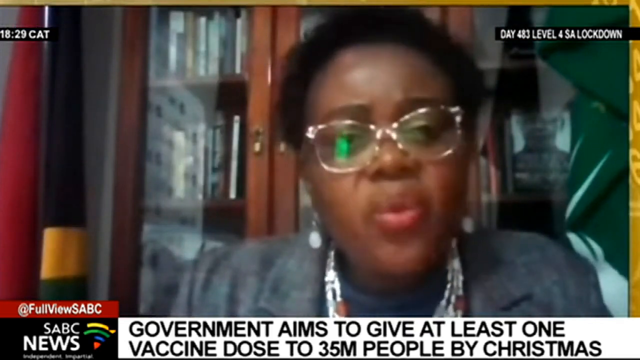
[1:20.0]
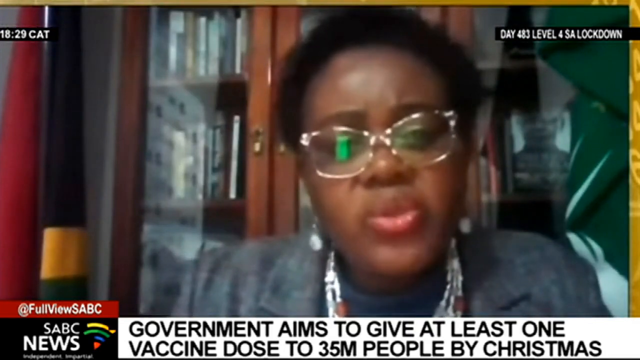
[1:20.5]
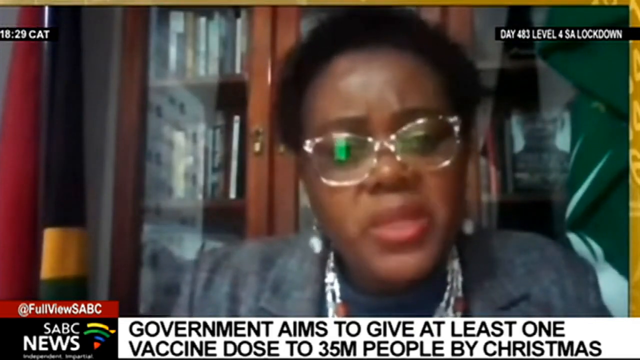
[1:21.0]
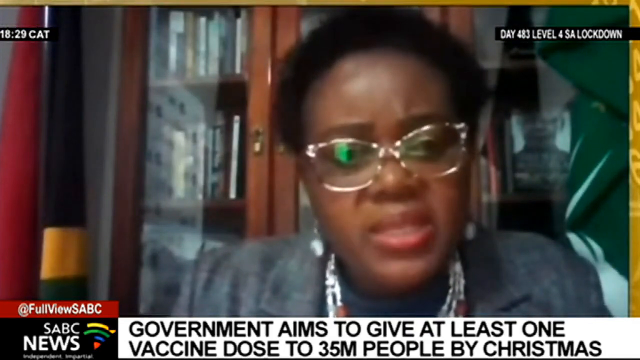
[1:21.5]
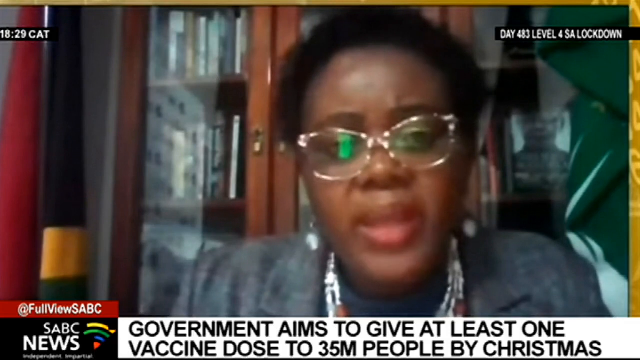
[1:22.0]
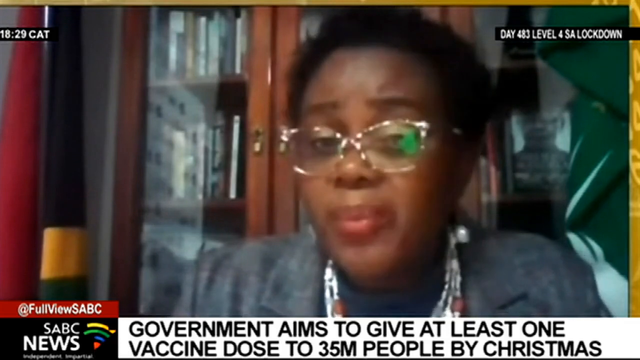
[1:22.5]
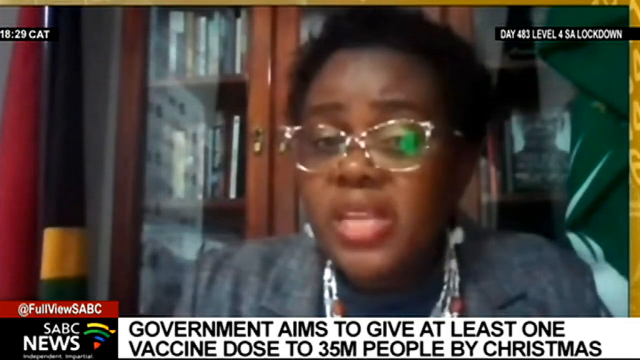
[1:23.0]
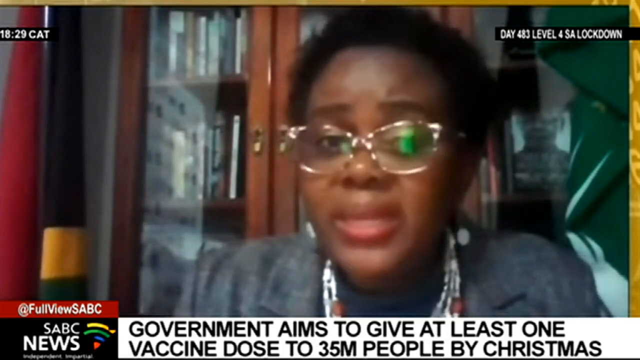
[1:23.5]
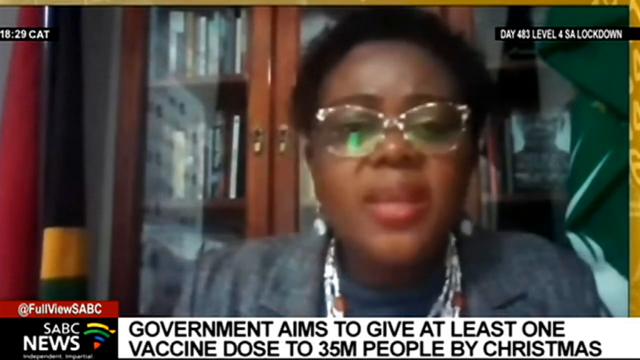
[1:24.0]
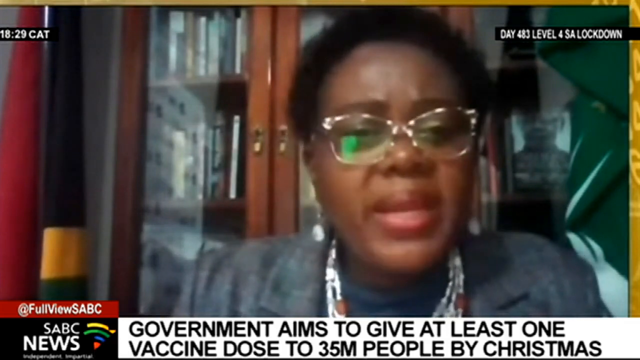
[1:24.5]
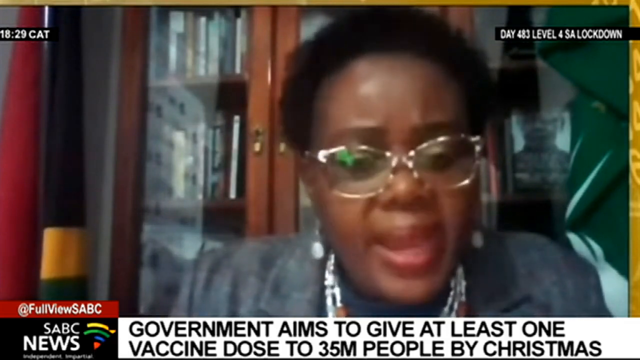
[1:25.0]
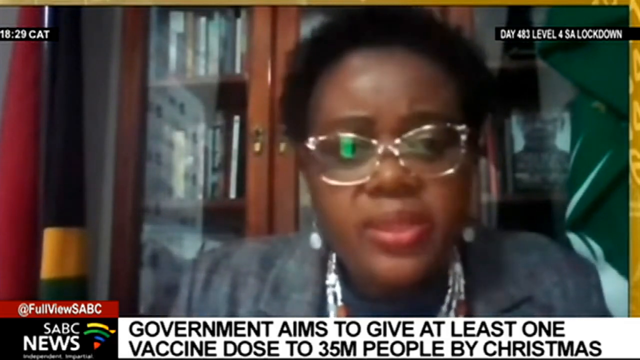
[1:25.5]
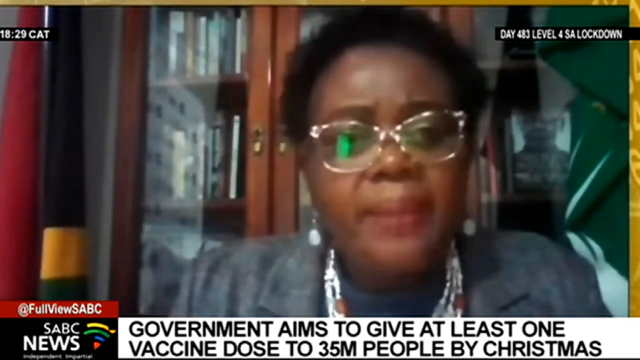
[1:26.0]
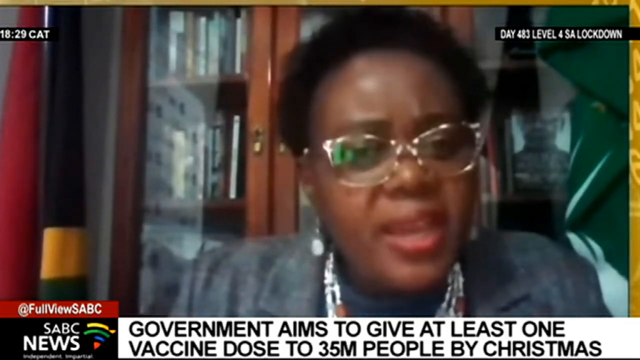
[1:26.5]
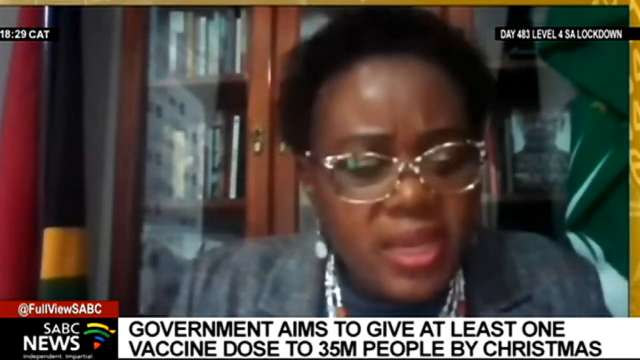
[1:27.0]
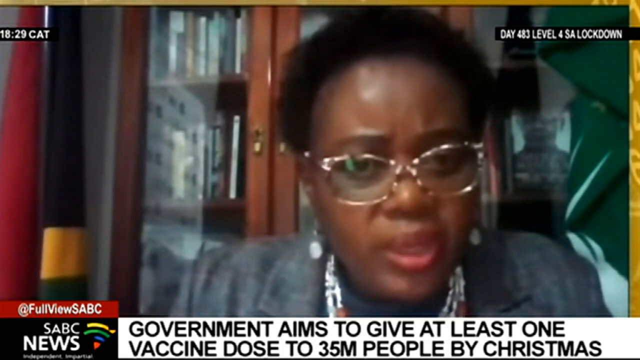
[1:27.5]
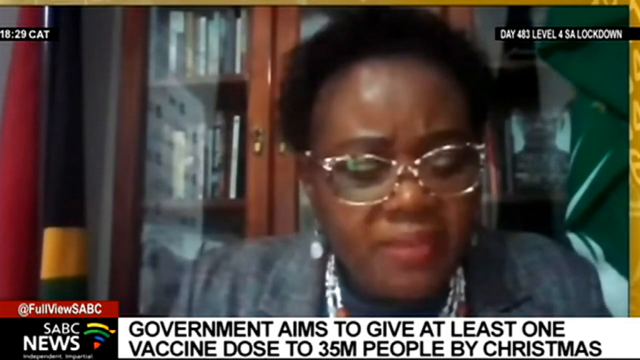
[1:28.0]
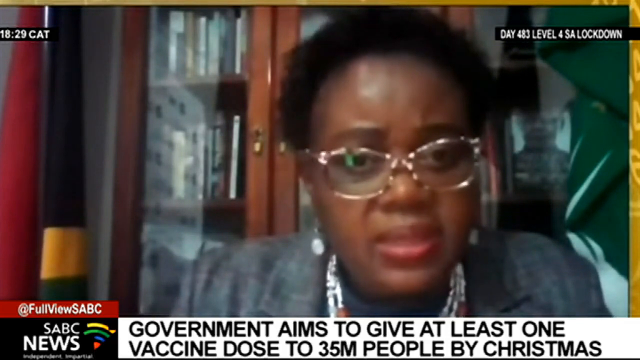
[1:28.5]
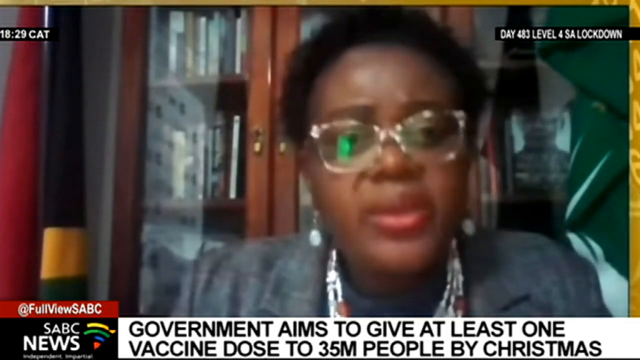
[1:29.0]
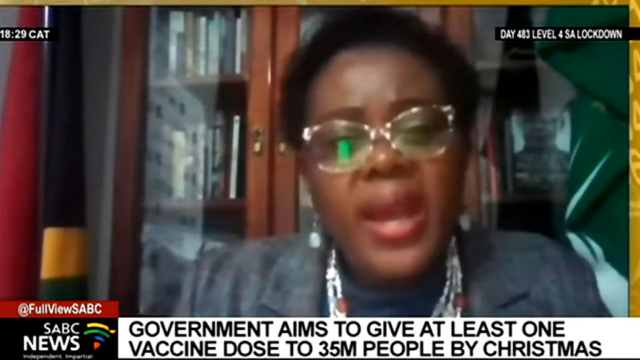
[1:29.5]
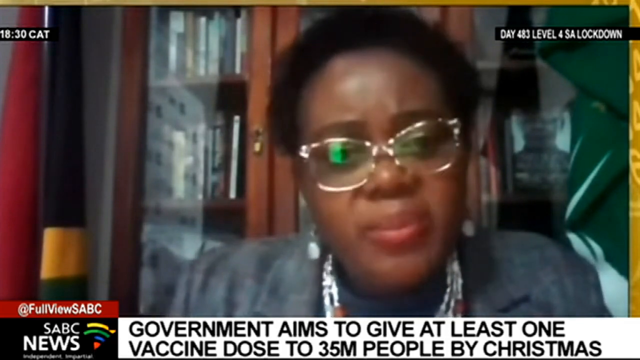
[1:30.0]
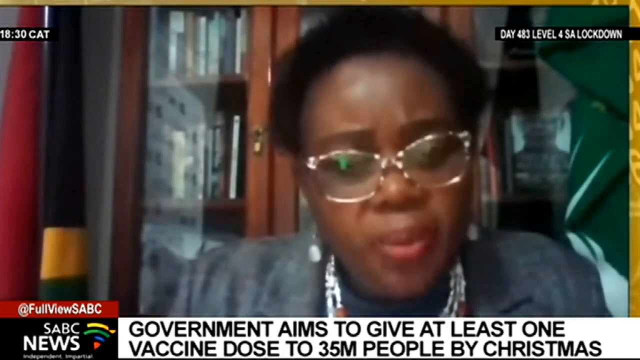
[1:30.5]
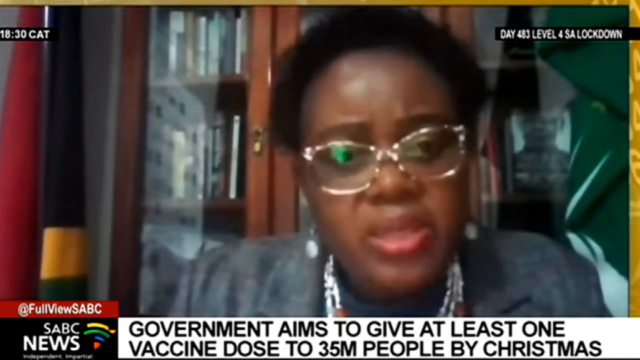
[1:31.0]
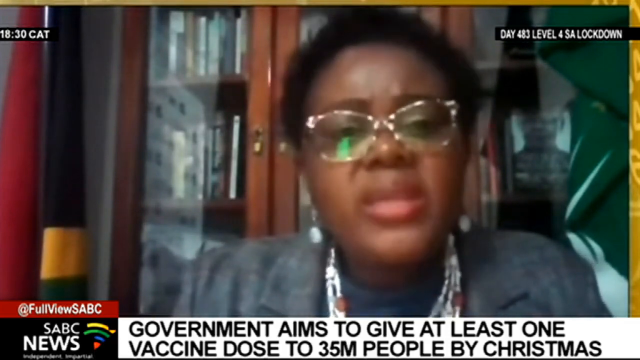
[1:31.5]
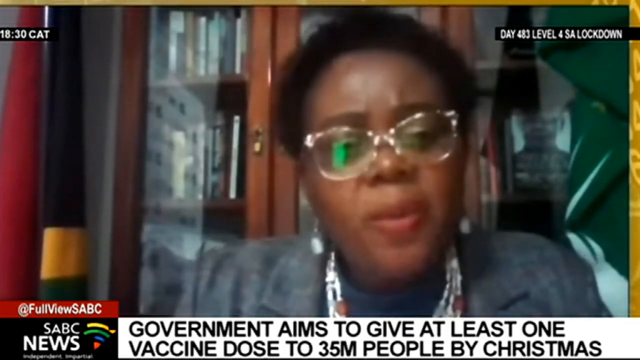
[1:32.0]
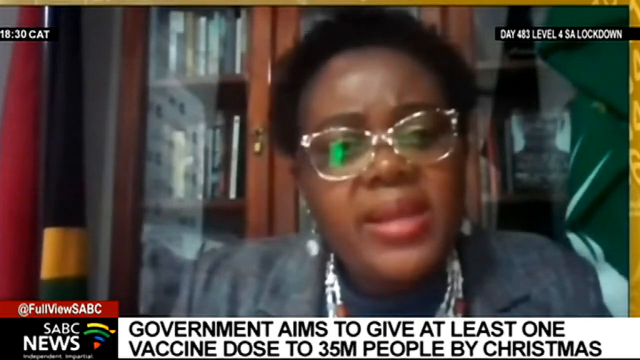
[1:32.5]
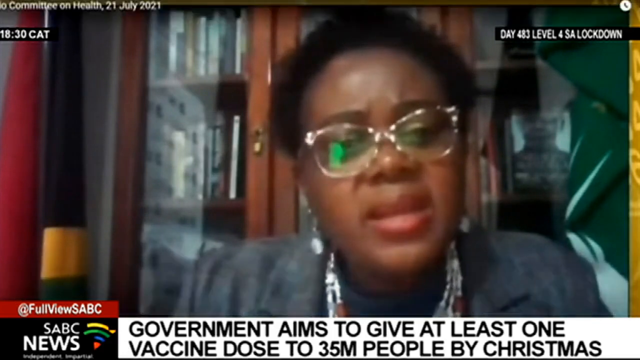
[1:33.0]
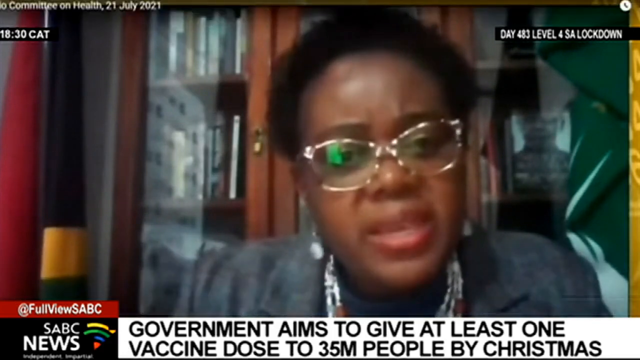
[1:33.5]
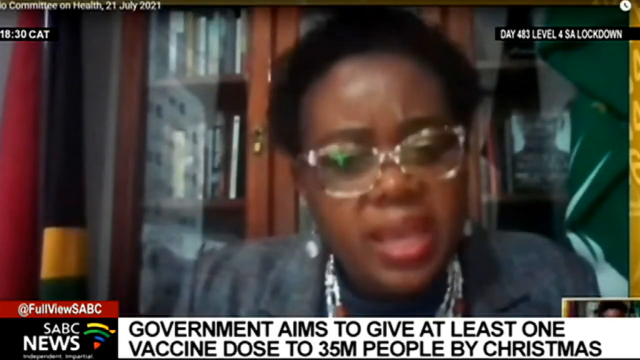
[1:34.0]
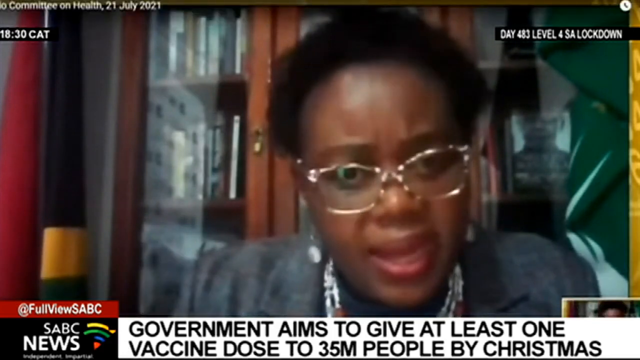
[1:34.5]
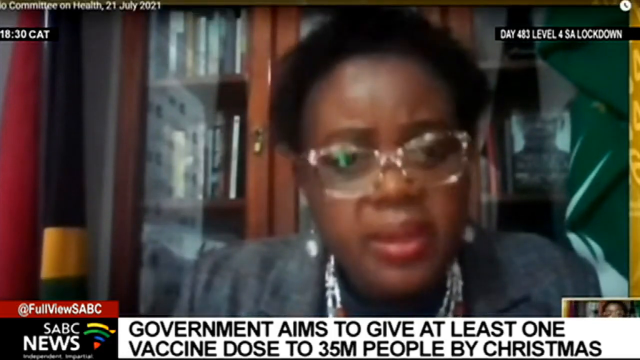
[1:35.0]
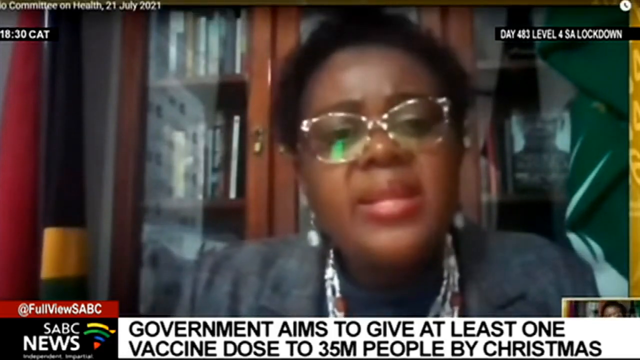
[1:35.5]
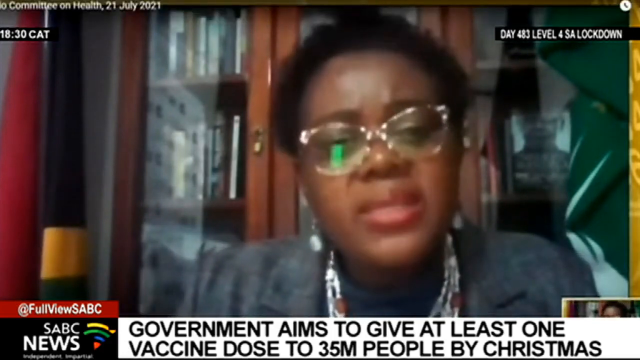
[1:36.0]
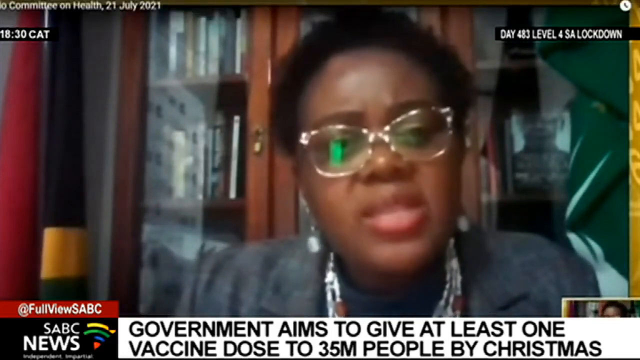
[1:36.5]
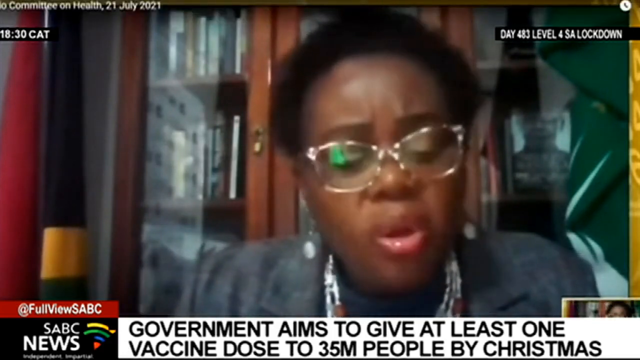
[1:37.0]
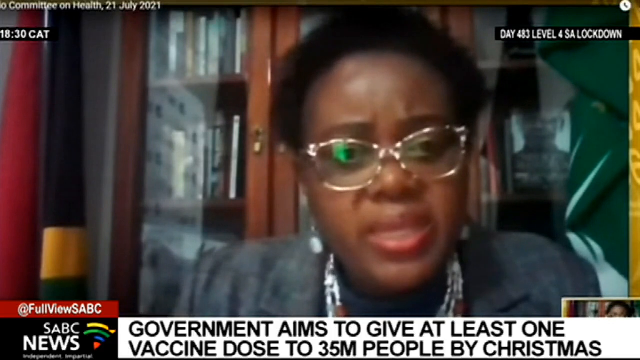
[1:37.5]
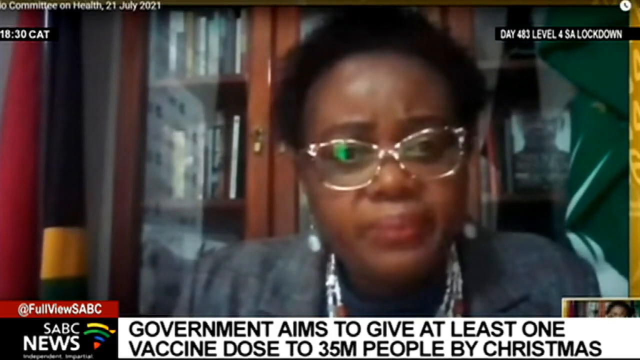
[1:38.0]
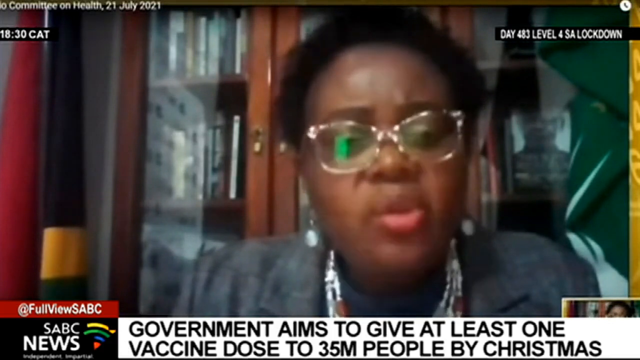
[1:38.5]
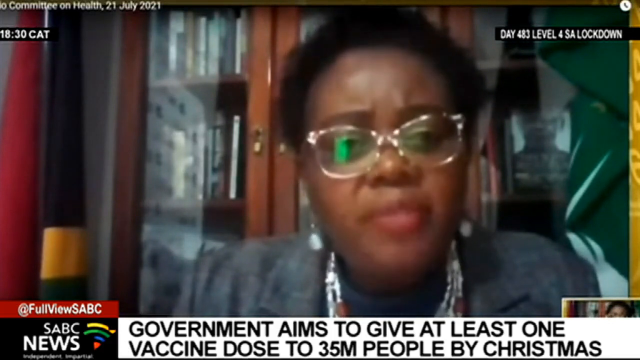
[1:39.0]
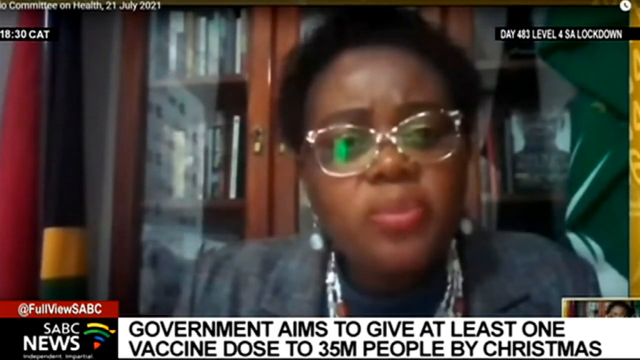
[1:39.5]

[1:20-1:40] The woman continues speaking. Next to the caption there is an SABC News logo with text beside it reading "@ full view SABC." In the bottom right of the screen there appears to be a small square showing the video of the woman on top of the larger one. On the left side of the bookcase behind her are two flags next to each other, and the bookcase has glass panels in front and doors that open with a small hanging bead. A clock in the top left of the screen shows the time as 18:29, and above it is cut-off white text that seems to read "Committee on Health, July 21st, 2021."